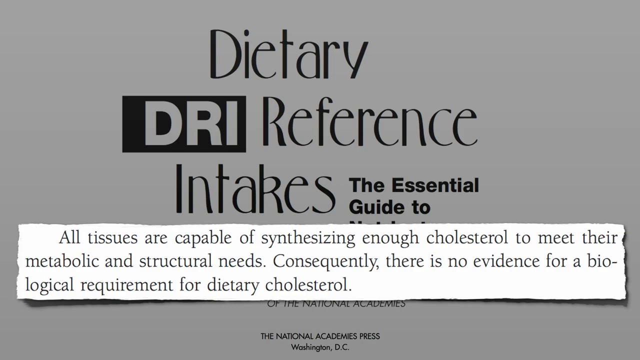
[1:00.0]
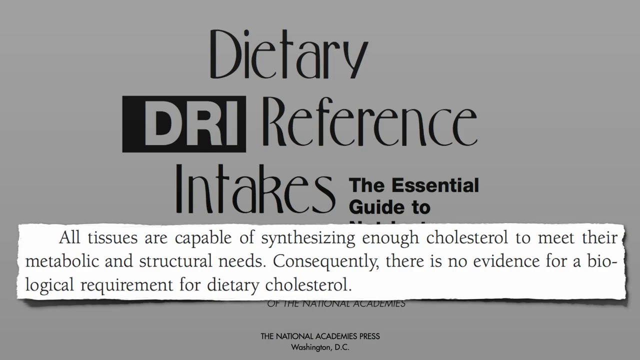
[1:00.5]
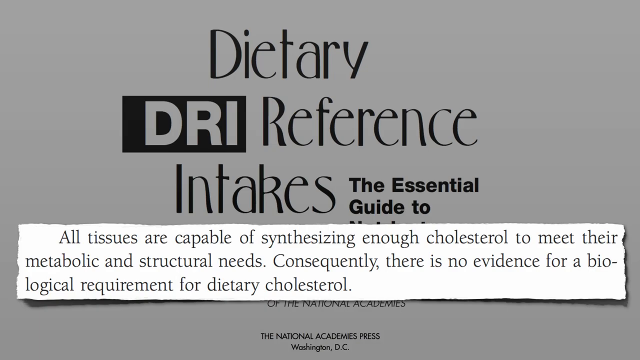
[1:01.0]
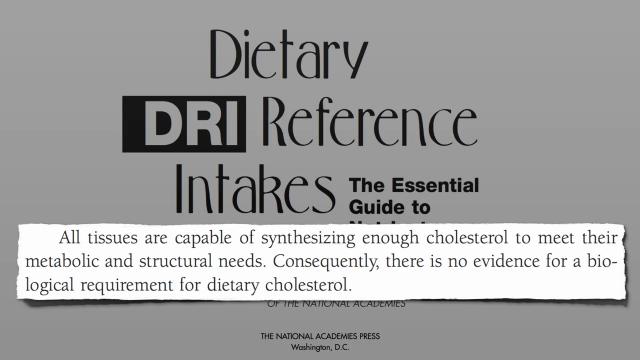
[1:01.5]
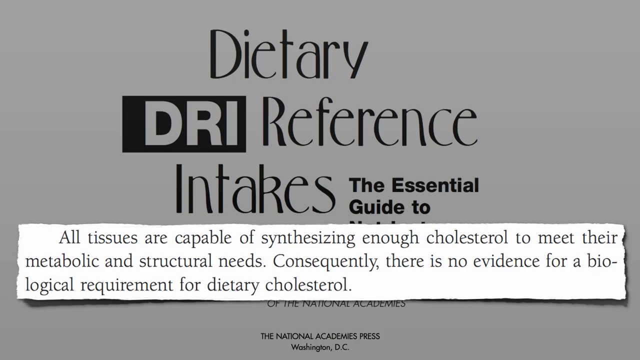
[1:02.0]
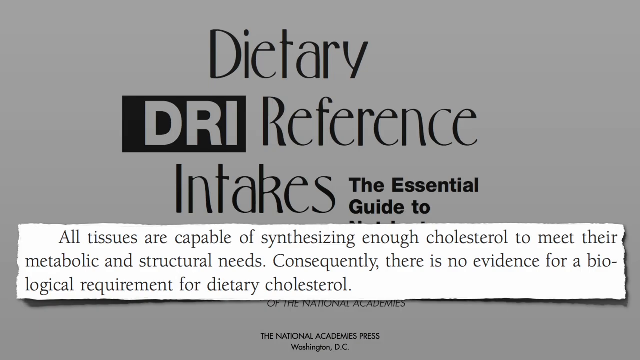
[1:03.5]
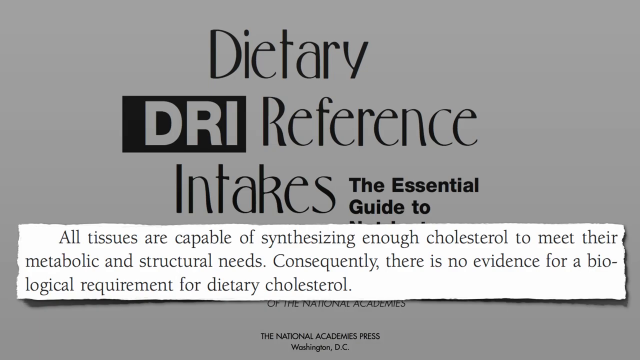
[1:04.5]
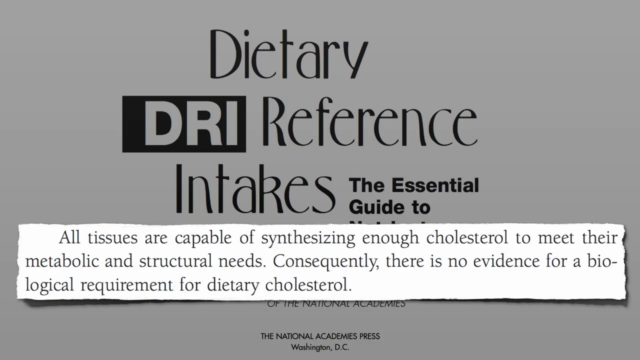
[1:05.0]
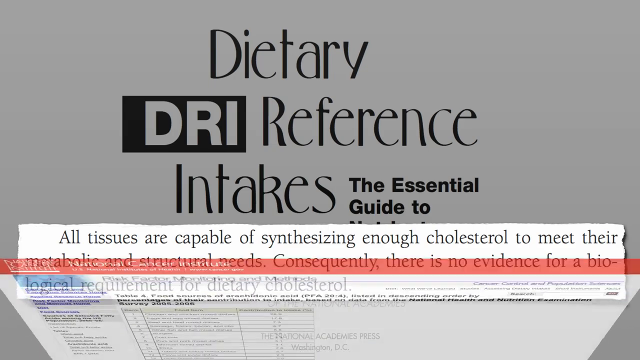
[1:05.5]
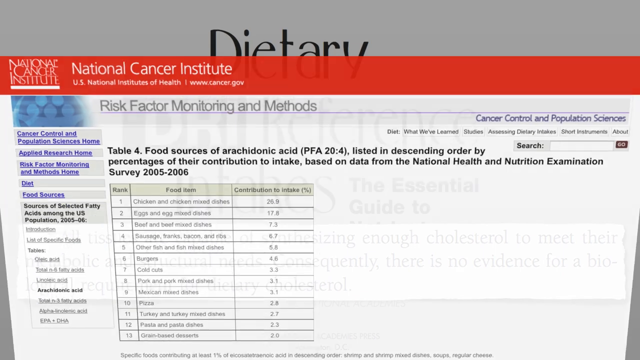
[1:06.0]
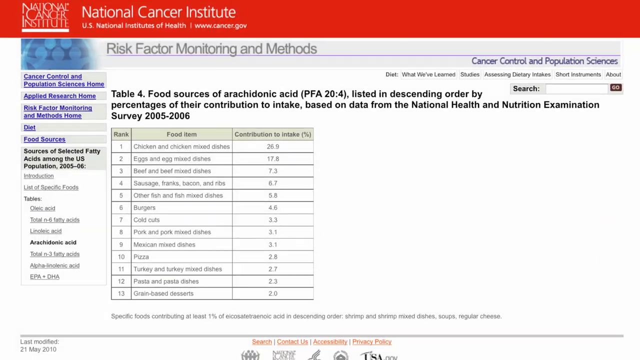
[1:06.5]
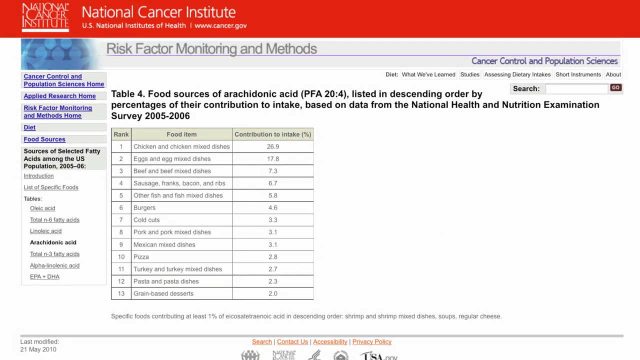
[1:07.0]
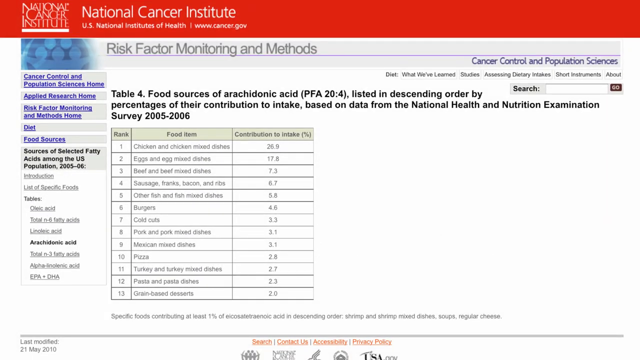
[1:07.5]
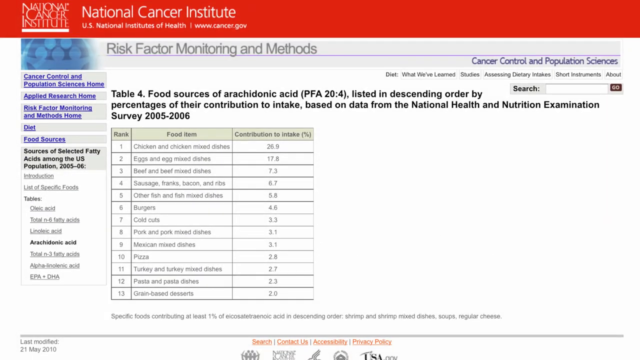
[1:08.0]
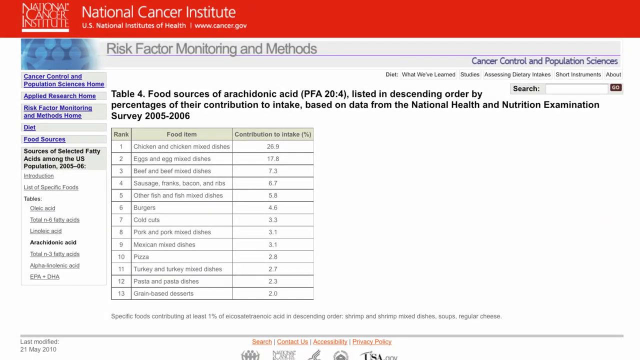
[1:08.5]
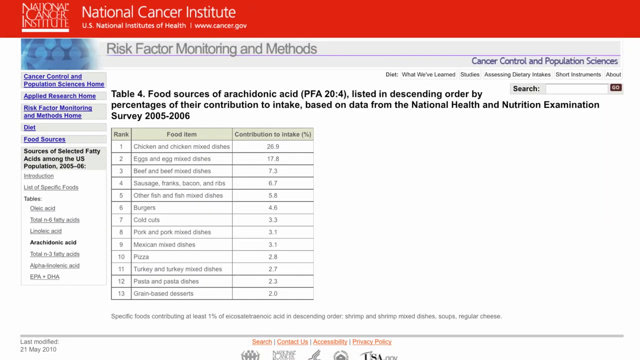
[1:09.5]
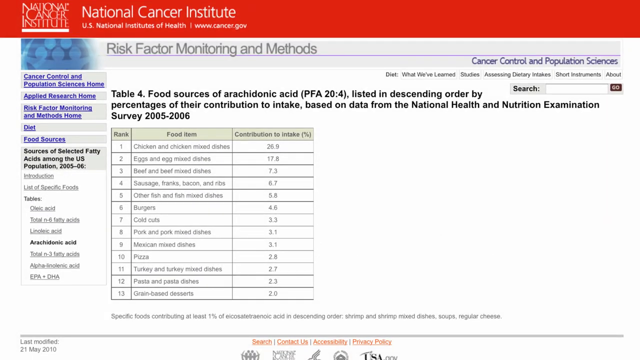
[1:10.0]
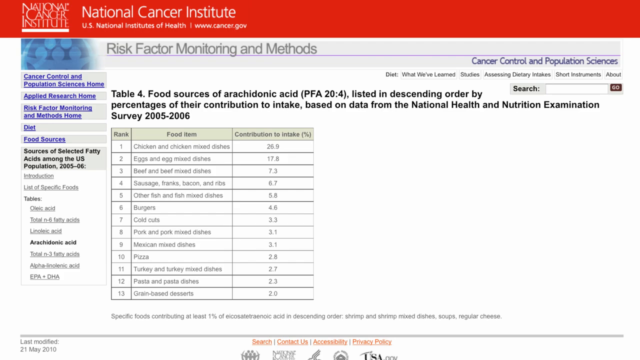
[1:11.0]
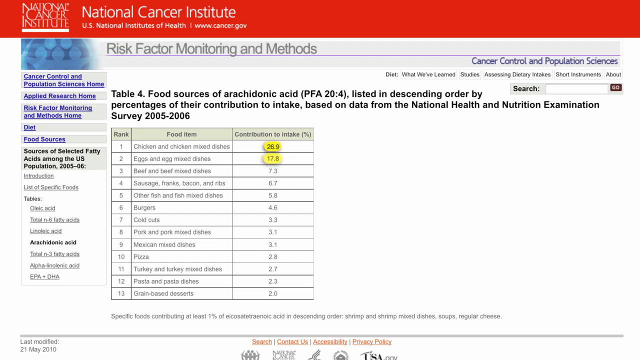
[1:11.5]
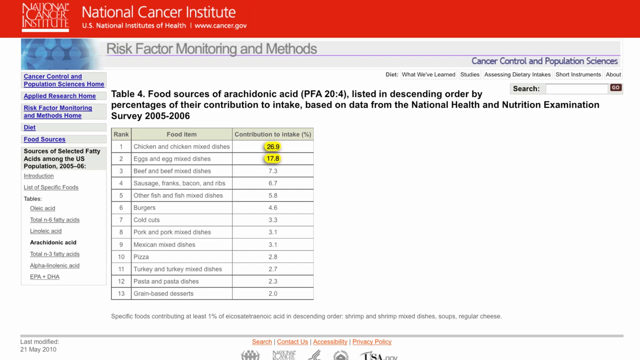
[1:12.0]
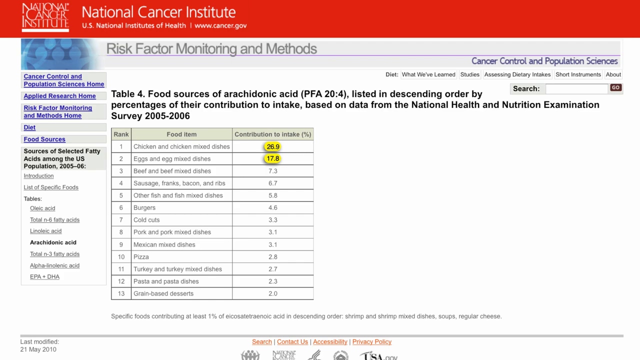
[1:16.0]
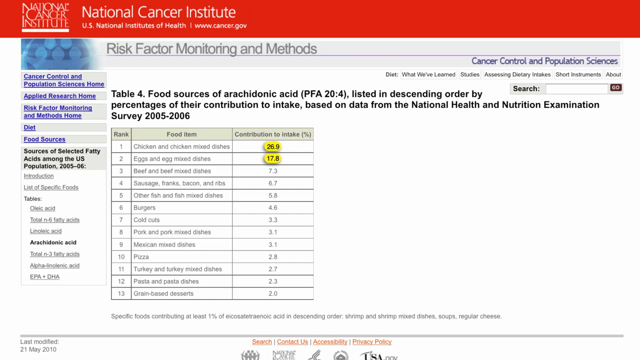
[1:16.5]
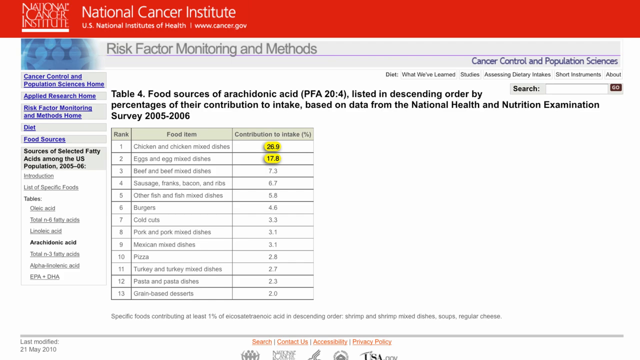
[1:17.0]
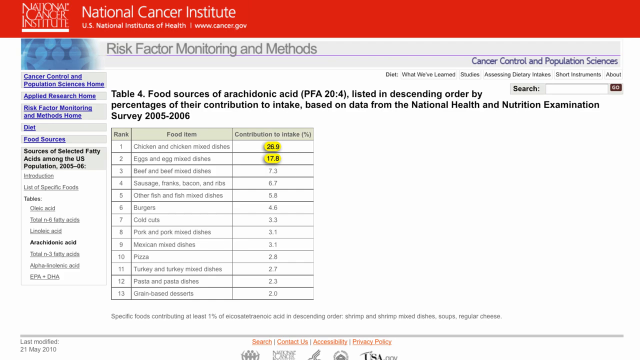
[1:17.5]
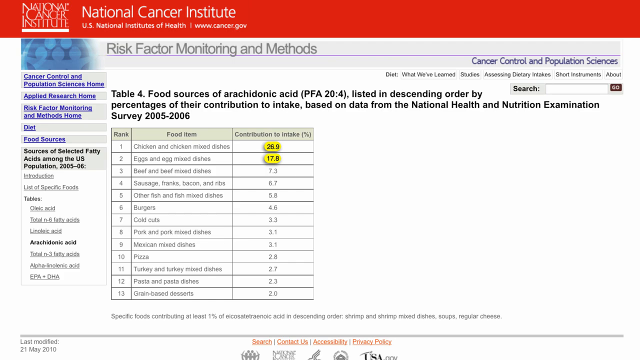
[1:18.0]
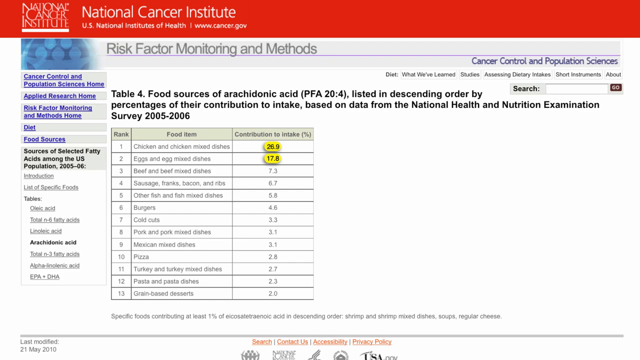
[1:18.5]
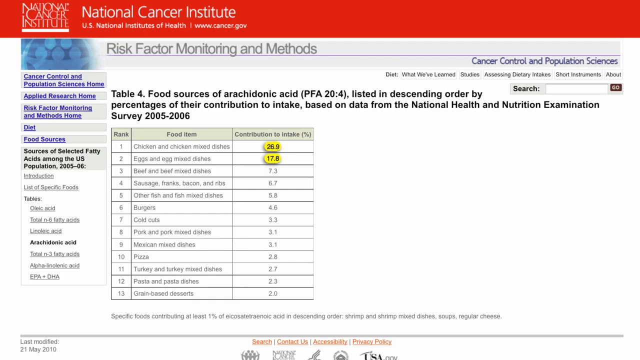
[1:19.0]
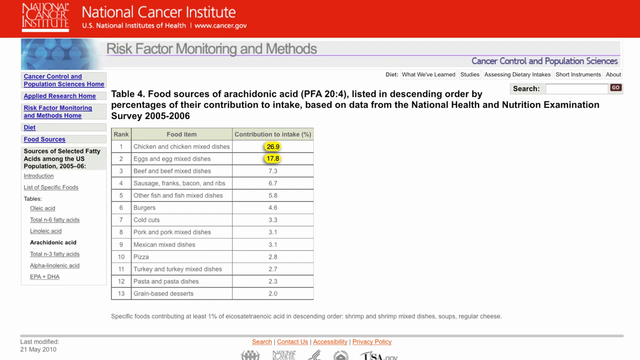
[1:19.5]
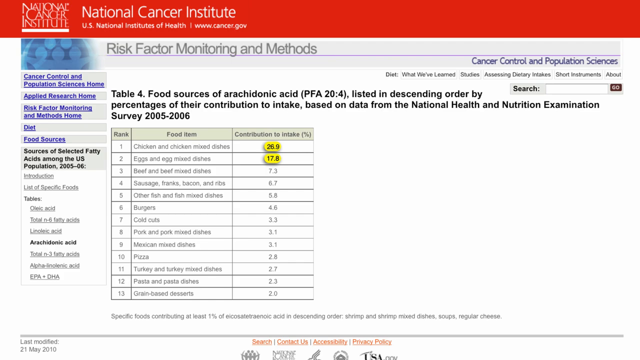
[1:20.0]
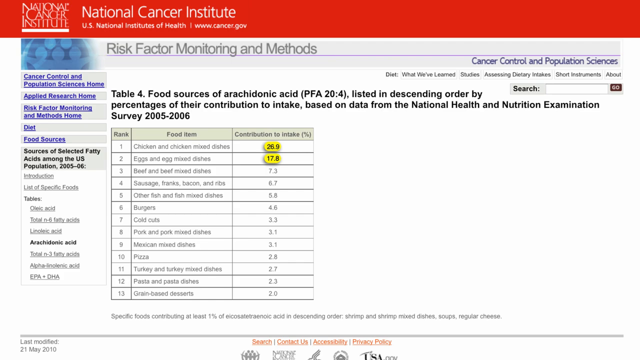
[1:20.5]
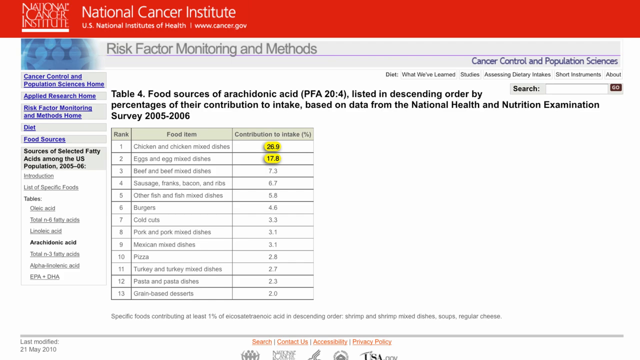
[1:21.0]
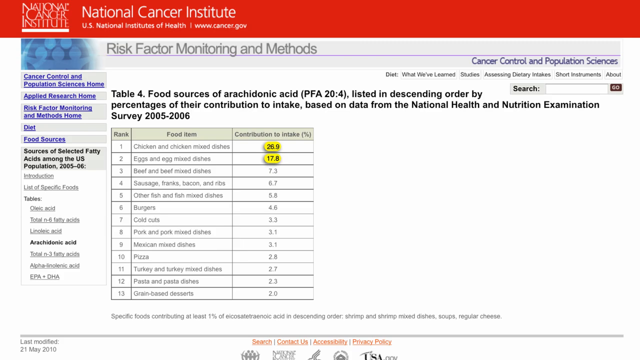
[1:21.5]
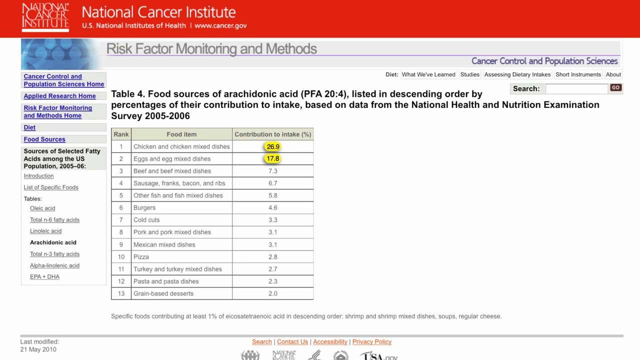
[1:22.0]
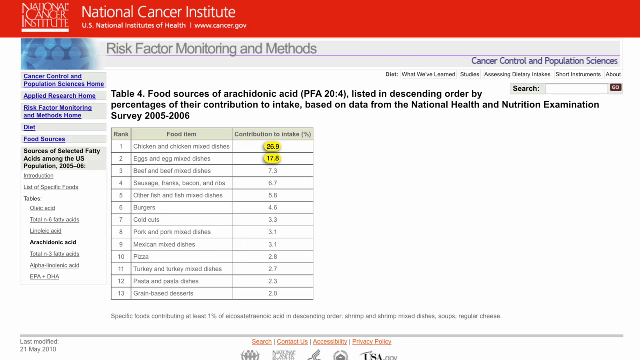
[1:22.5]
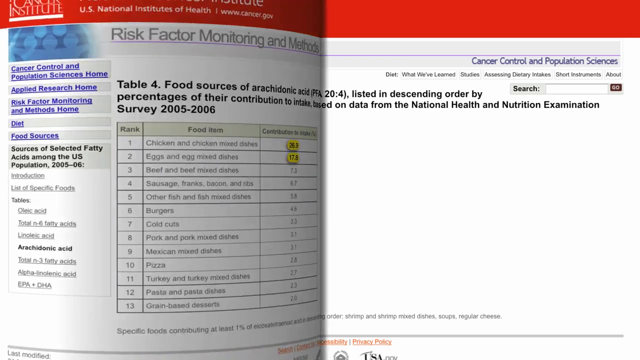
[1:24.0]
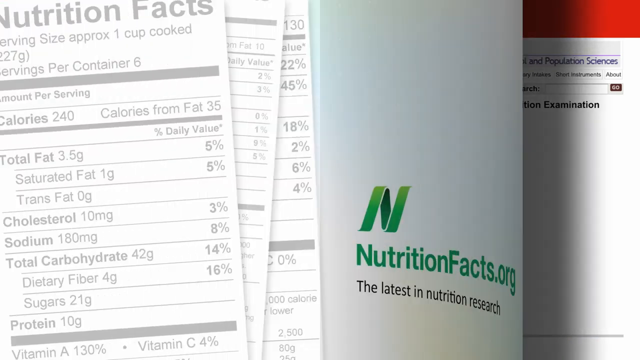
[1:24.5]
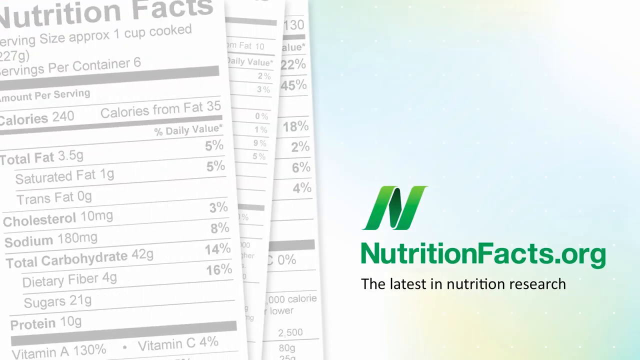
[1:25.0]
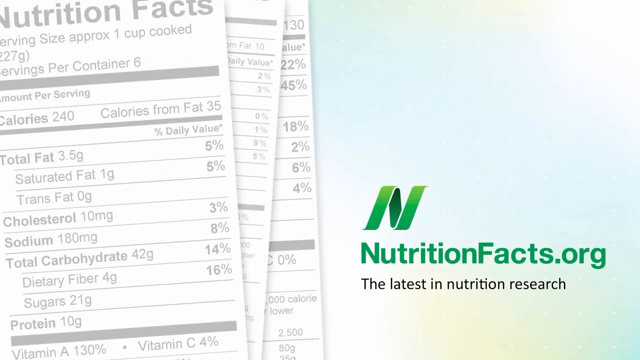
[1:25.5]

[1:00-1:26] A file from the National Cancer Institute is pulled up, with its logo on the left side and the website cancer.gov. The page is titled "Risk Factor Monitoring and Methods". The main frame has a table of food sources of arachidonic acid listed in descending order by percentage of their contribution to intake, based on data from the National Health and Nutrition Examination survey conducted in 2005 to 2006. There are 13 lines in total: rank one is chicken and chicken mixed dishes at 26.9%, two is eggs and egg mixed dishes at 17.8%, three is beef and beef mixed dishes at 7.3, four is sausage, franks, bacon and ribs at 6.7, five is other fish and fish mixed dishes at 5.8, and thirteen is grain-based desserts at 2.0%. The contribution-to-intake values for ranks one and two, 26.9 and 17.8%, are then highlighted in yellow. The video then cuts to ending credits identical to the opening credits, showing nutritionfacts.org and "the latest in nutrition research".